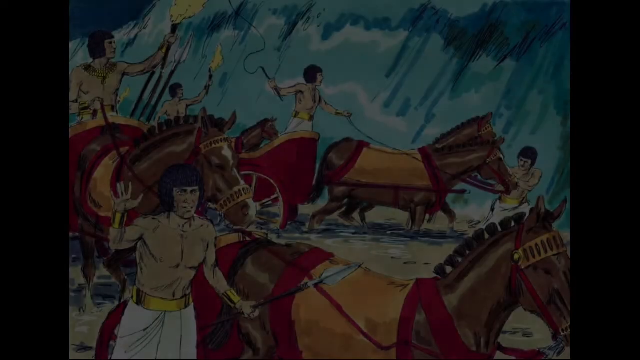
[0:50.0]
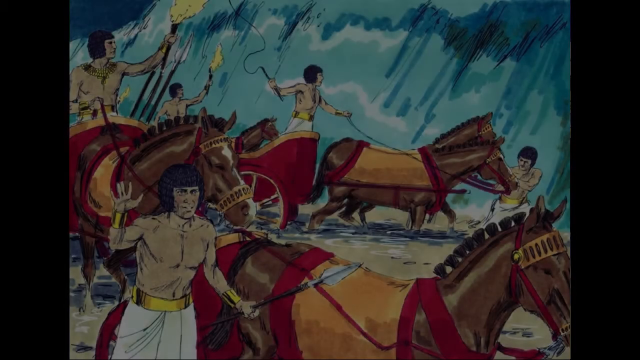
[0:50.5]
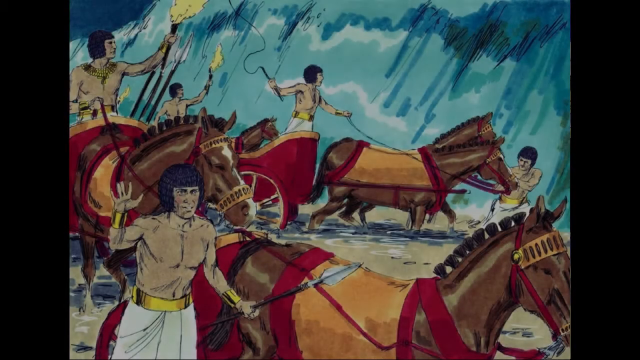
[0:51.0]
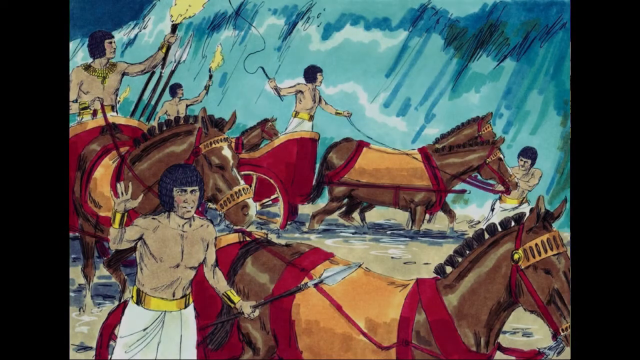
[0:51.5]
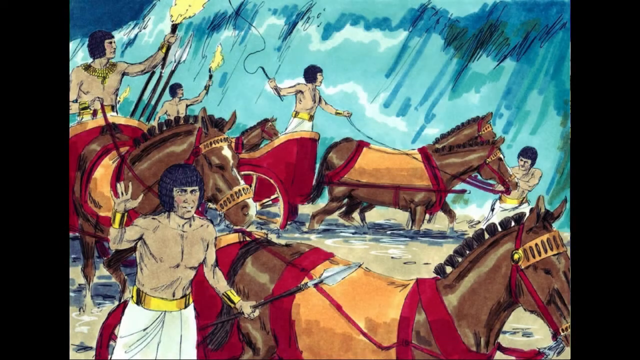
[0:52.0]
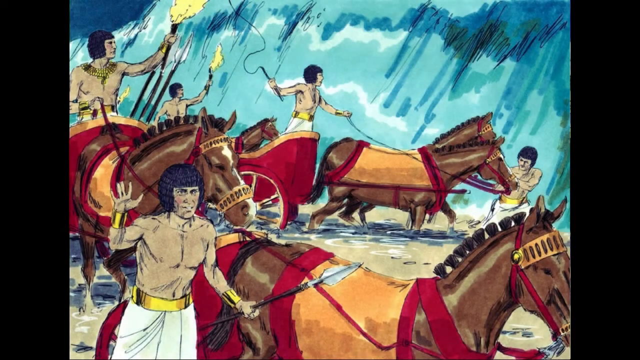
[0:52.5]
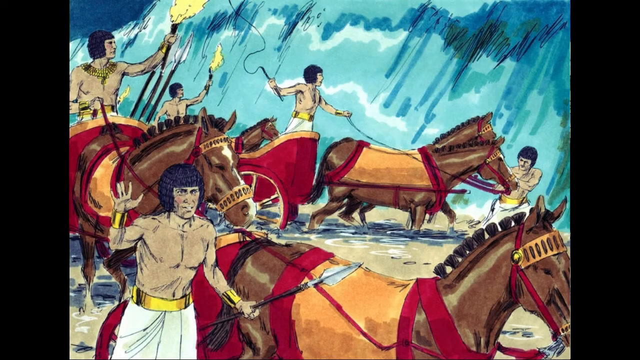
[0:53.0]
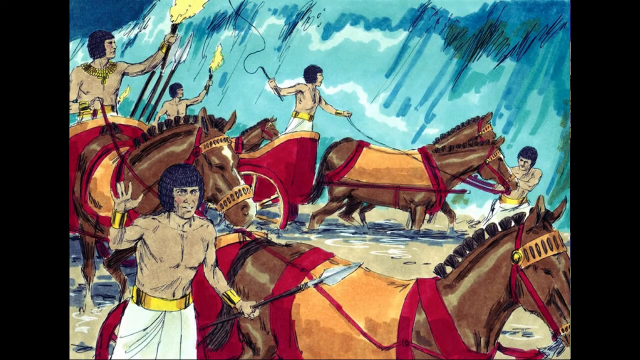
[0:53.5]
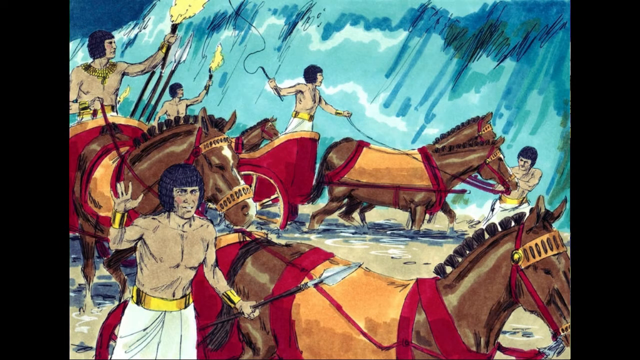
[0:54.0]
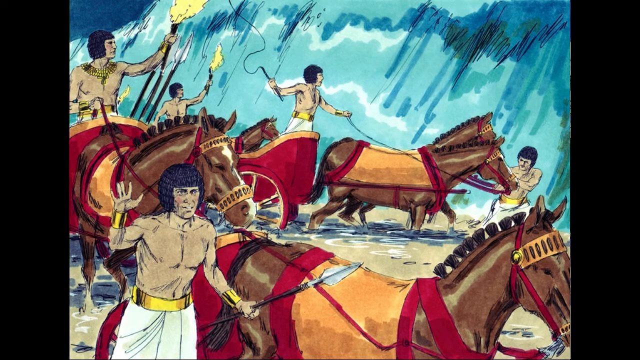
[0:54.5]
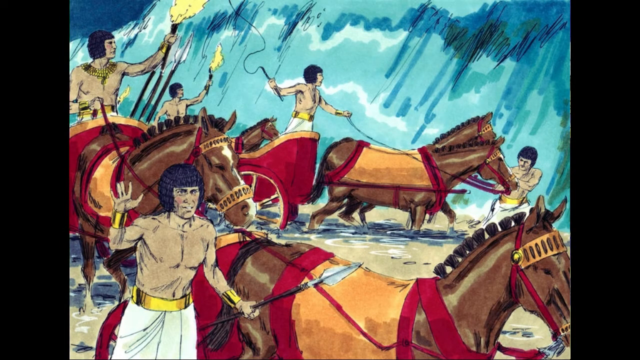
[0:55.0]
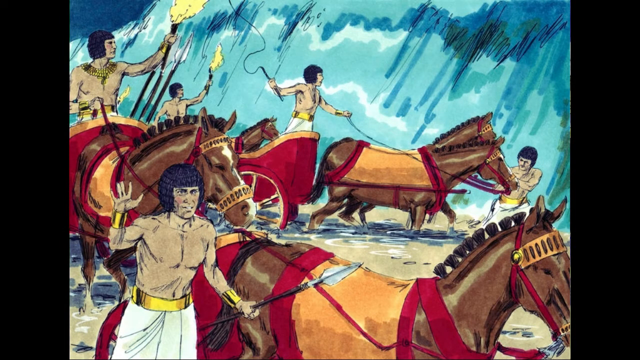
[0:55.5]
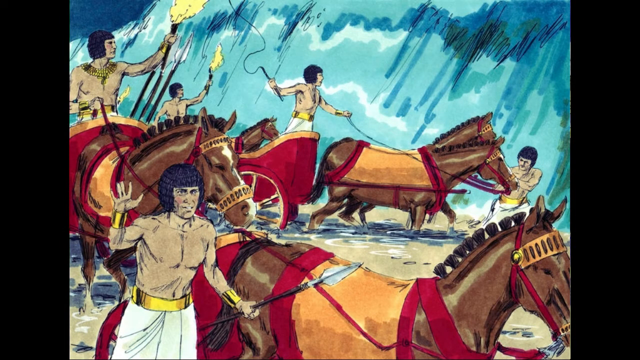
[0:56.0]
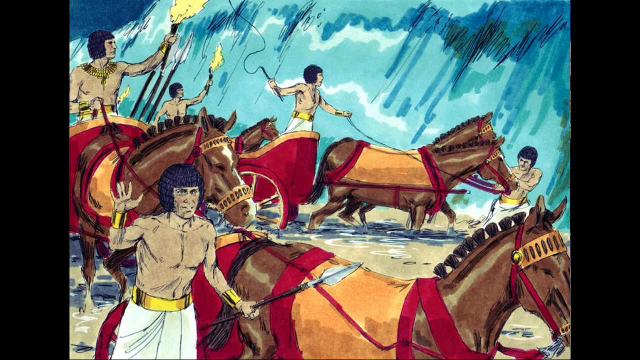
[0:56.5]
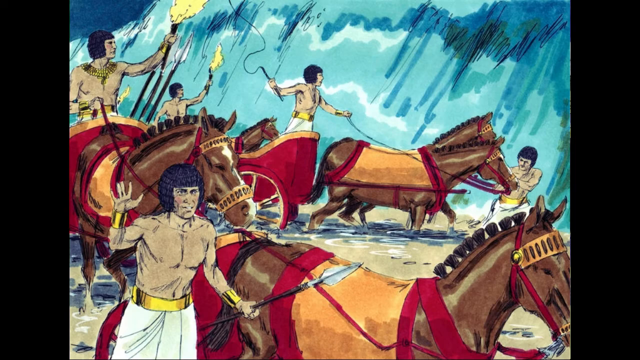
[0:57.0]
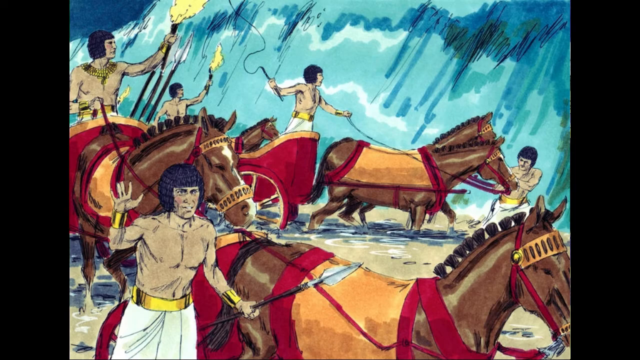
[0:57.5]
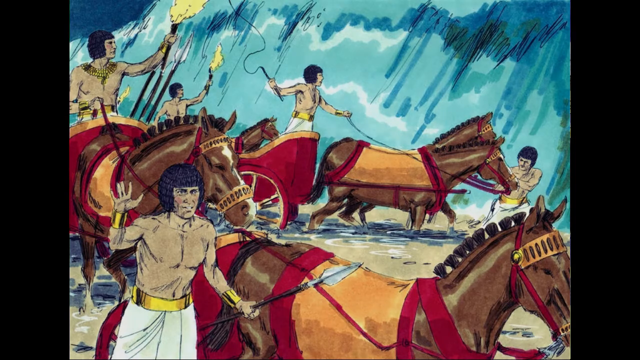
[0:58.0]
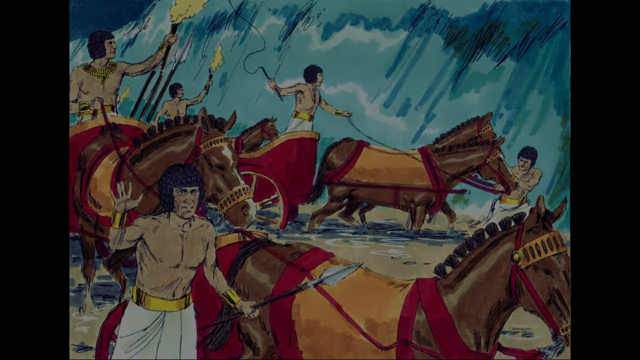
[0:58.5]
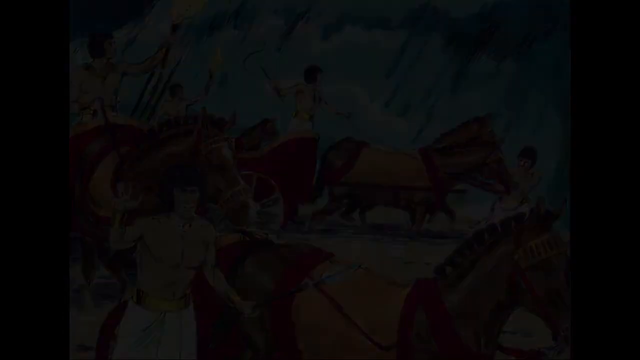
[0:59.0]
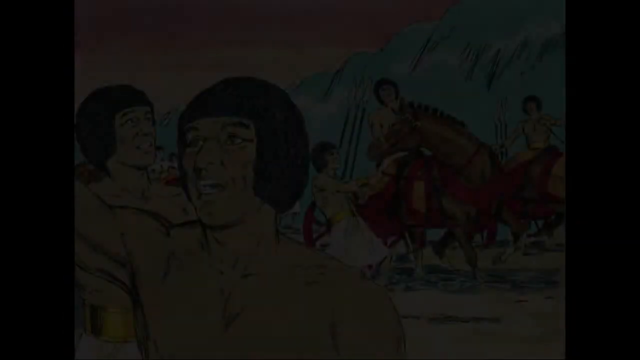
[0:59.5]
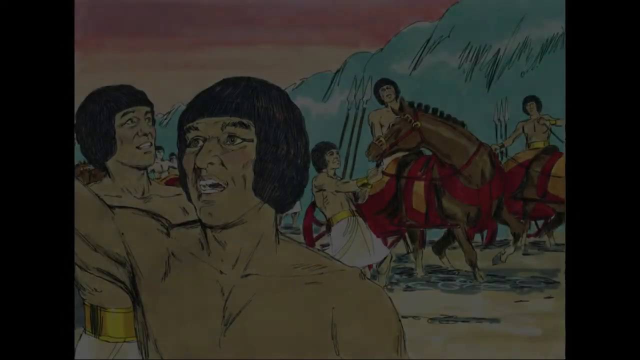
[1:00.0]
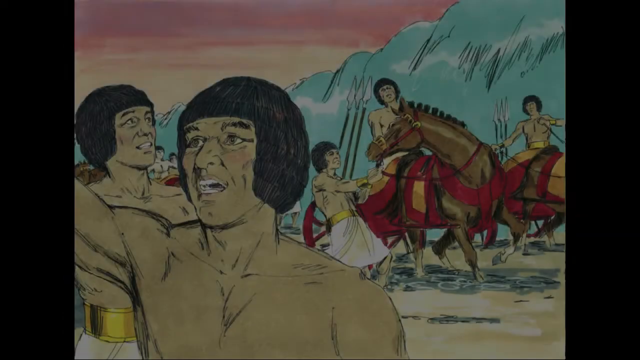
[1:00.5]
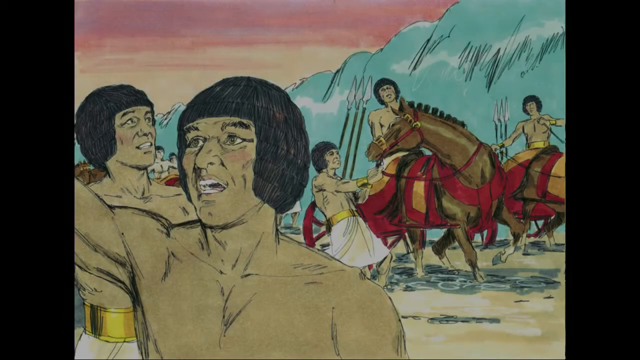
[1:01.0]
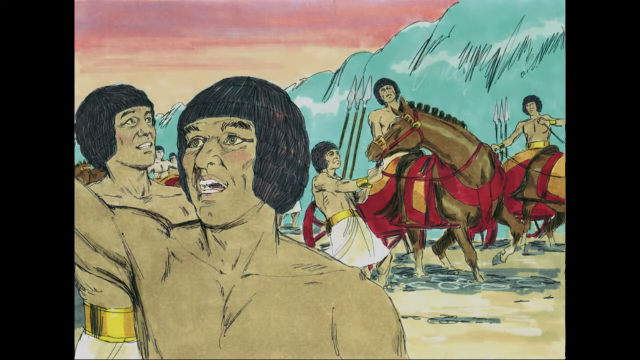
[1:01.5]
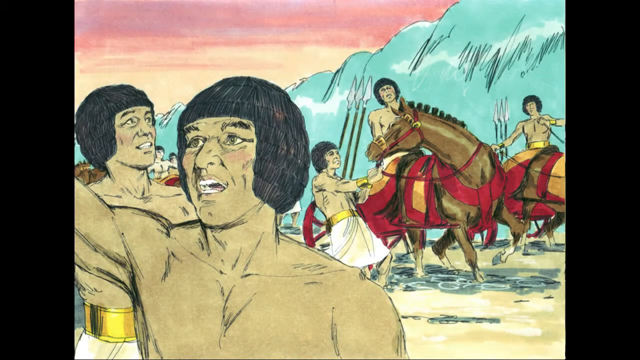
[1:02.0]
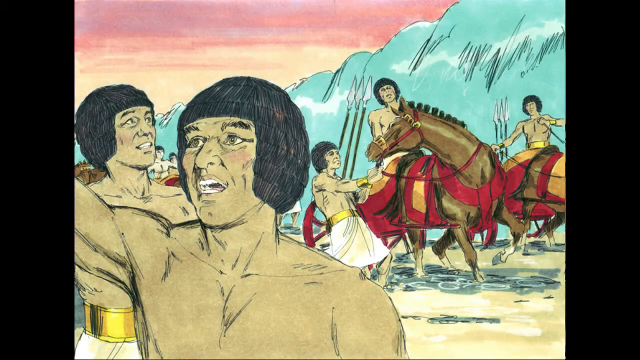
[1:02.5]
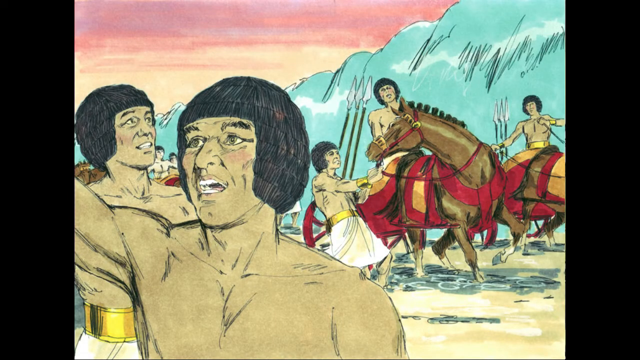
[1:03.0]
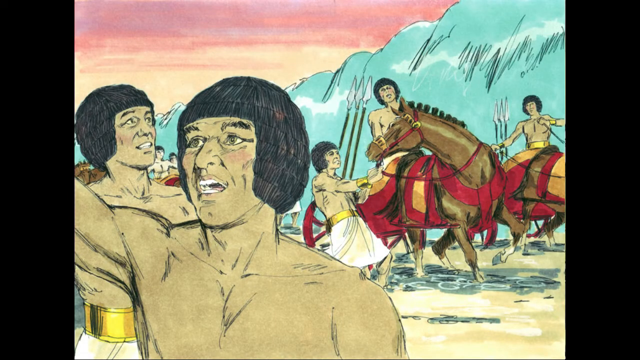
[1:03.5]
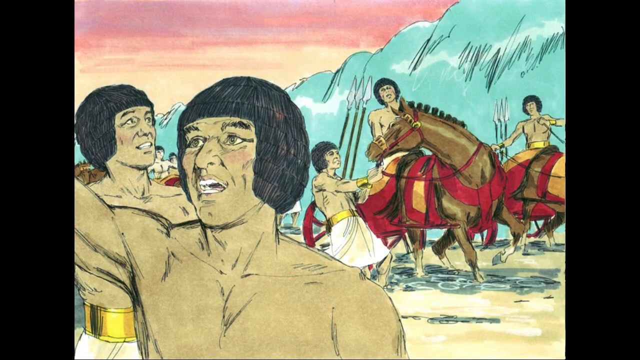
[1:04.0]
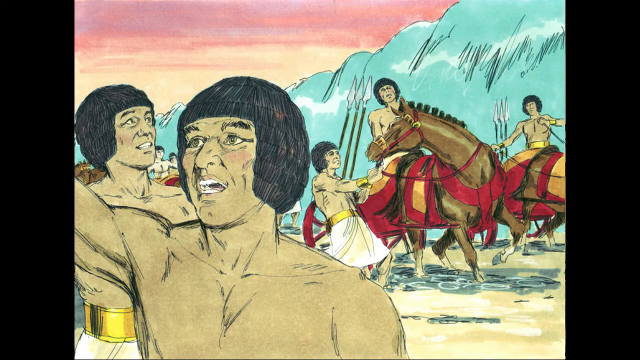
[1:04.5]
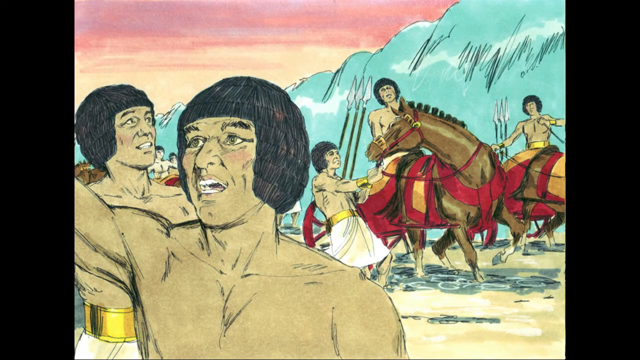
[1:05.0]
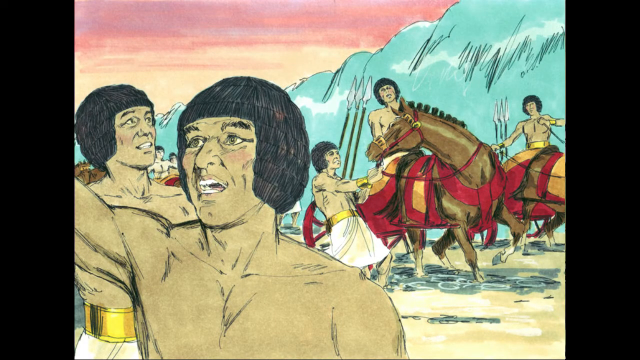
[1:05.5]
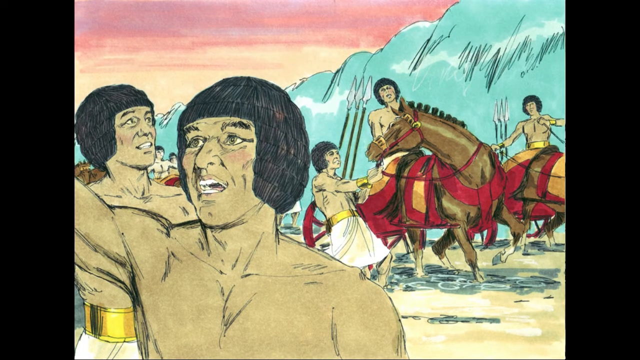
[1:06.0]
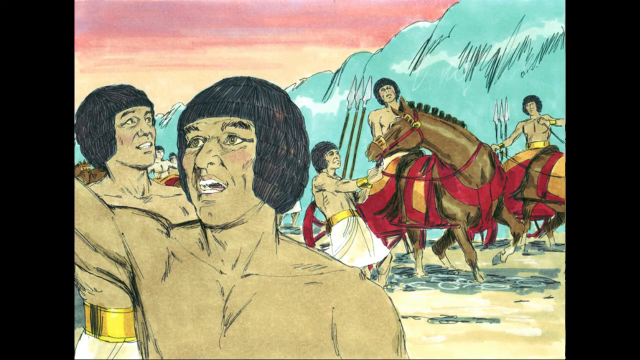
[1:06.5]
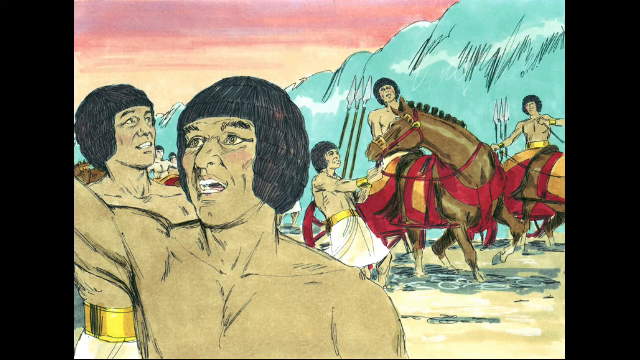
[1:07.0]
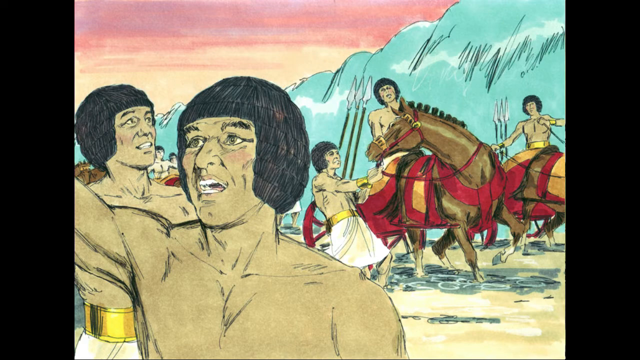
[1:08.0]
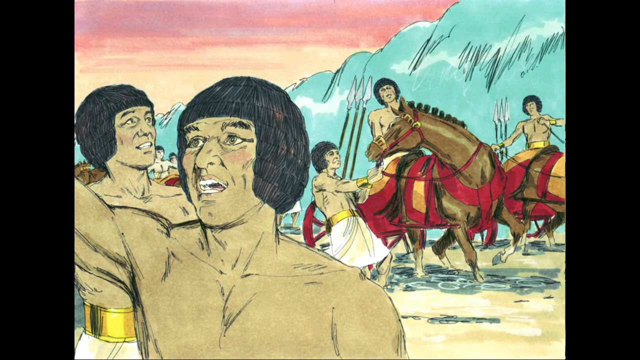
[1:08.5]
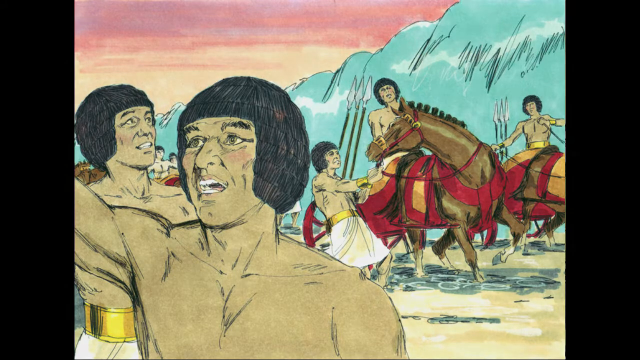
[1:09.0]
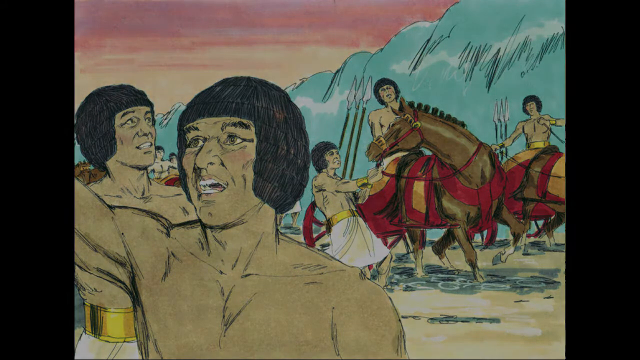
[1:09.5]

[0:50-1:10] The men seem to be soldiers and warriors using handmade things. There is a lot of water behind them and on the right and left sides, and something seems to be sinking in that water.